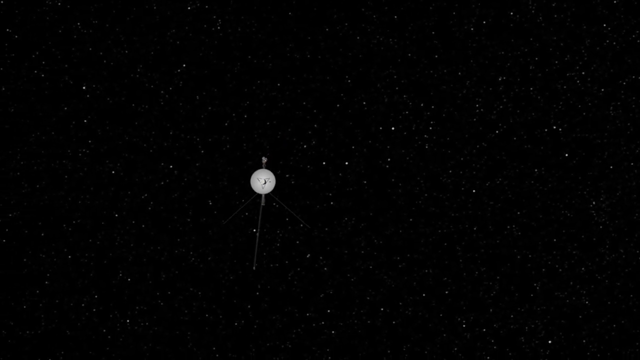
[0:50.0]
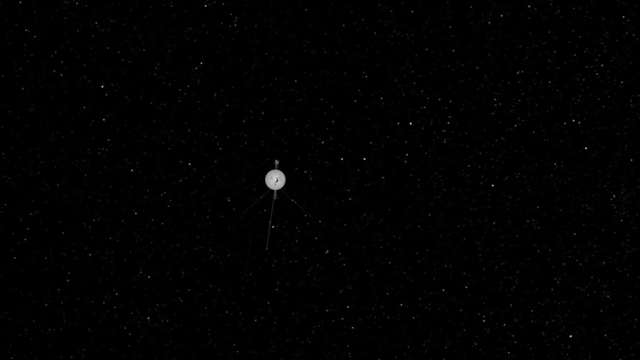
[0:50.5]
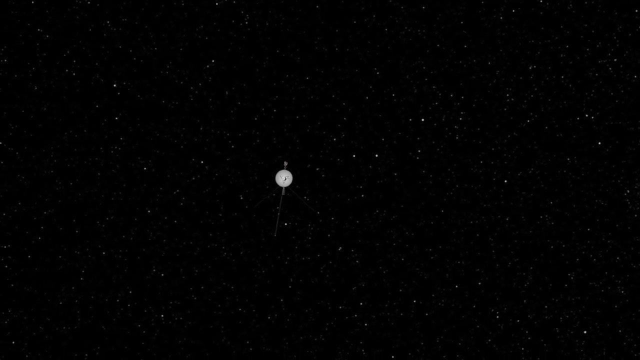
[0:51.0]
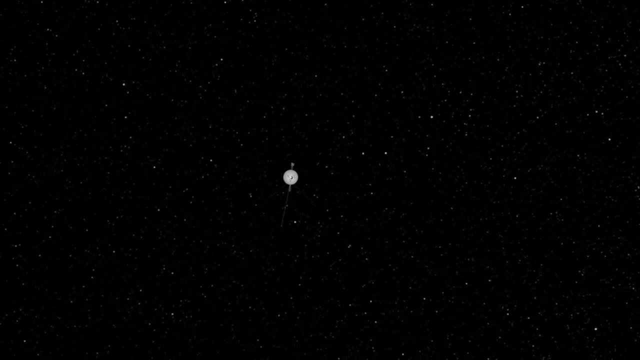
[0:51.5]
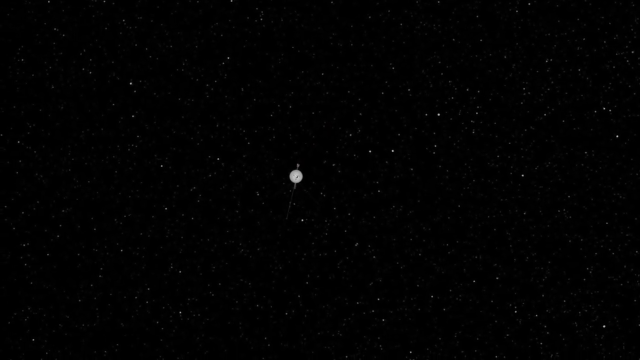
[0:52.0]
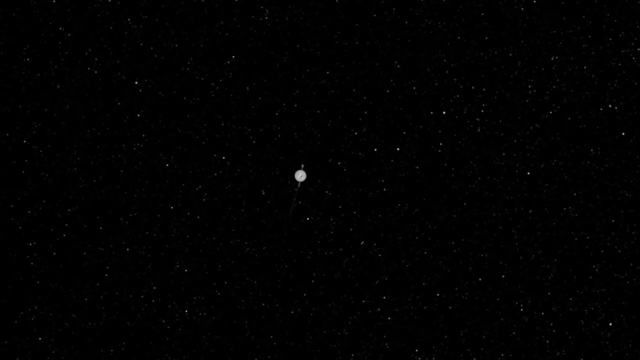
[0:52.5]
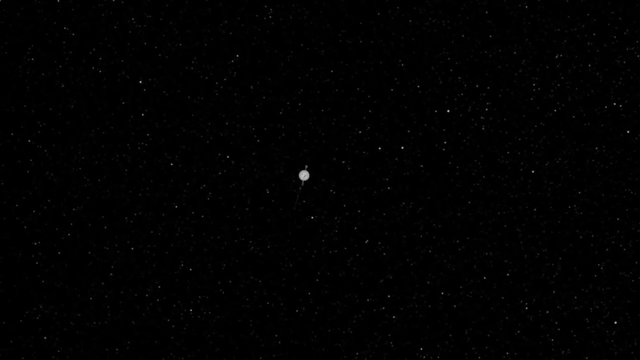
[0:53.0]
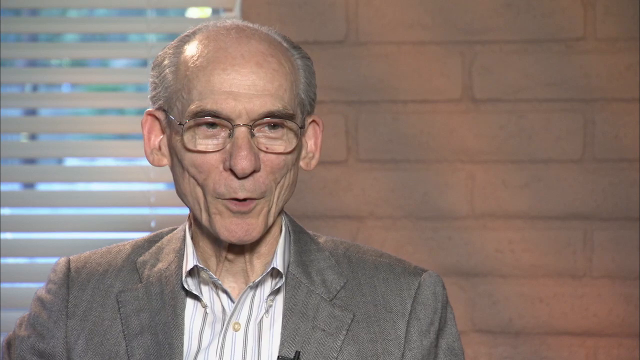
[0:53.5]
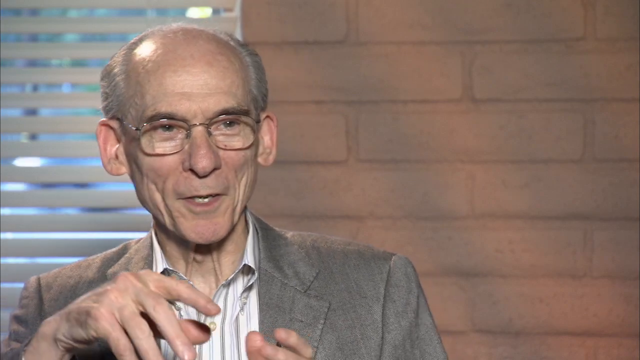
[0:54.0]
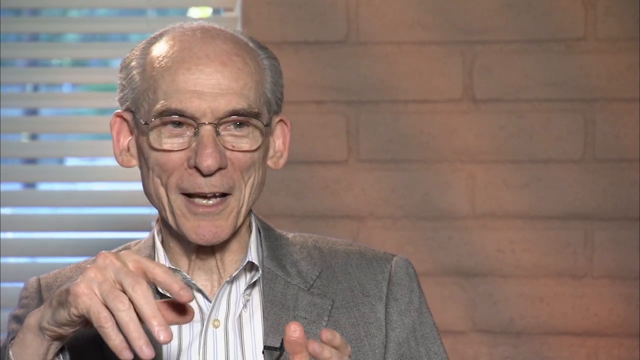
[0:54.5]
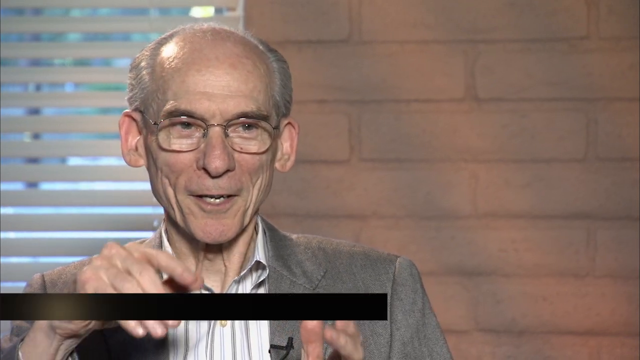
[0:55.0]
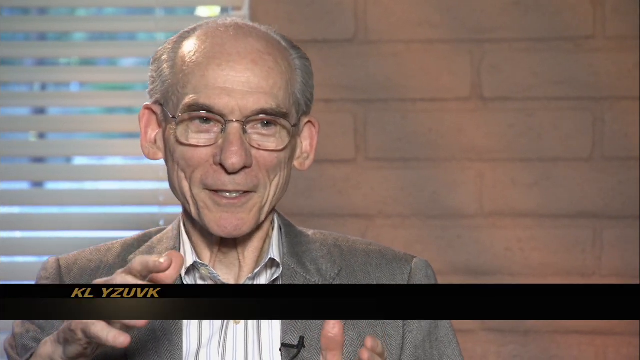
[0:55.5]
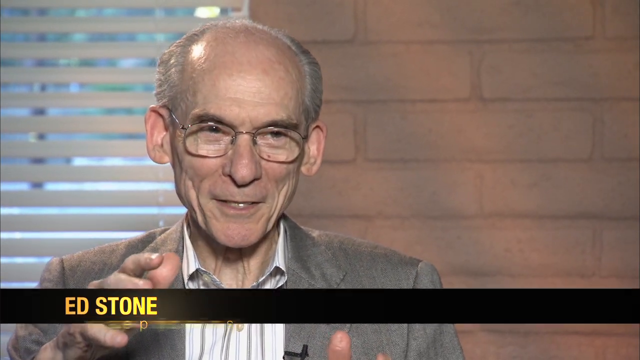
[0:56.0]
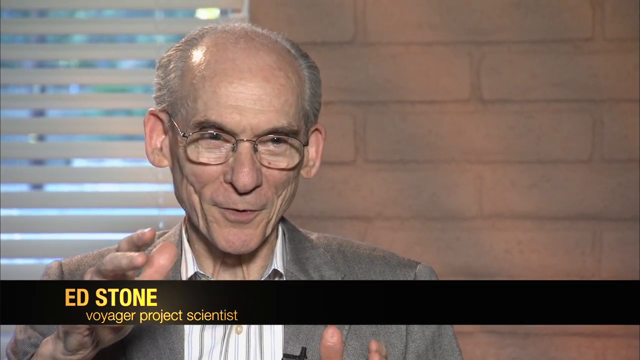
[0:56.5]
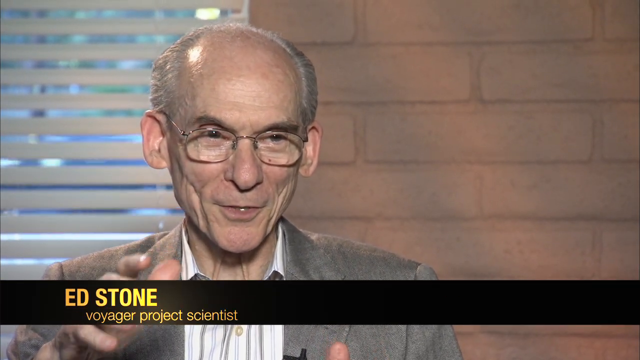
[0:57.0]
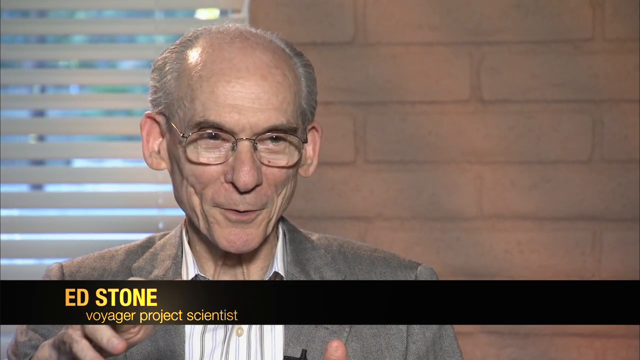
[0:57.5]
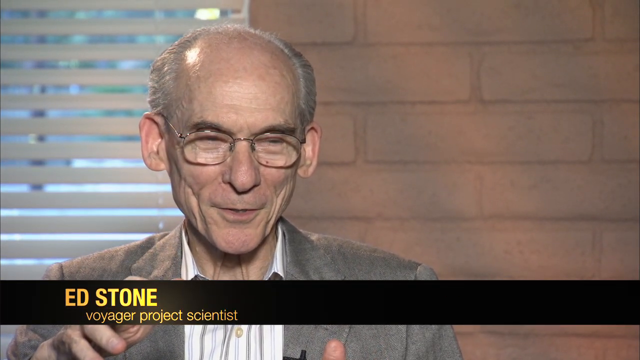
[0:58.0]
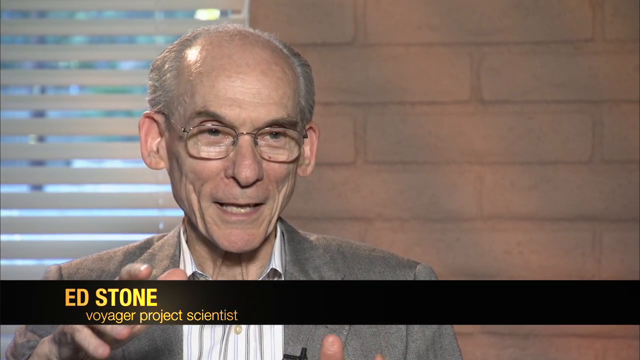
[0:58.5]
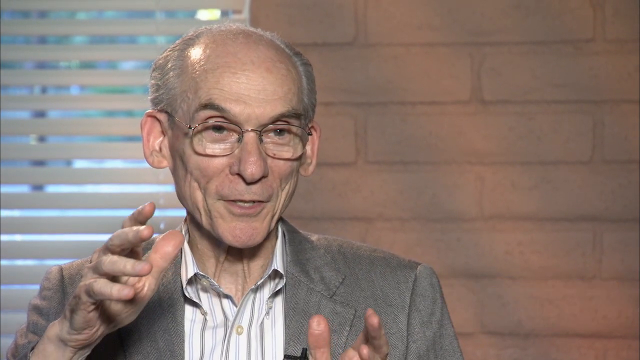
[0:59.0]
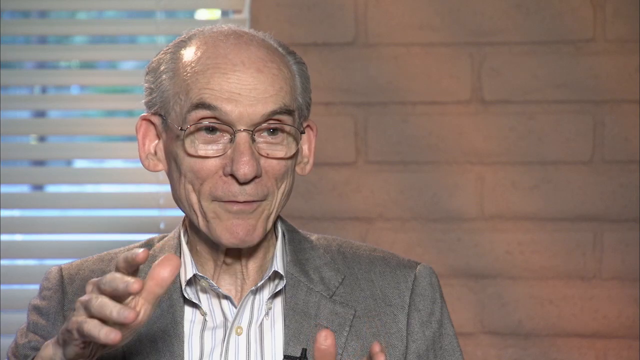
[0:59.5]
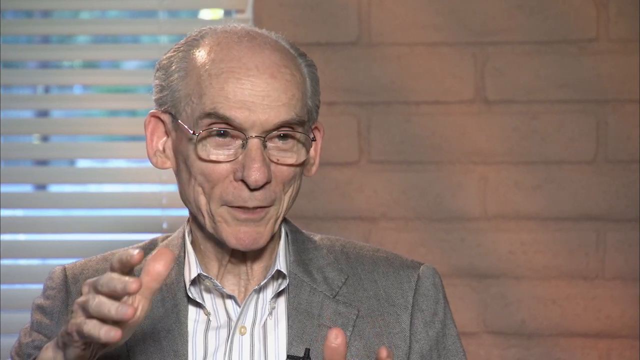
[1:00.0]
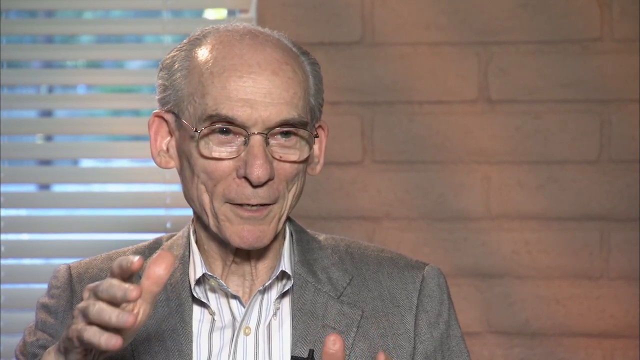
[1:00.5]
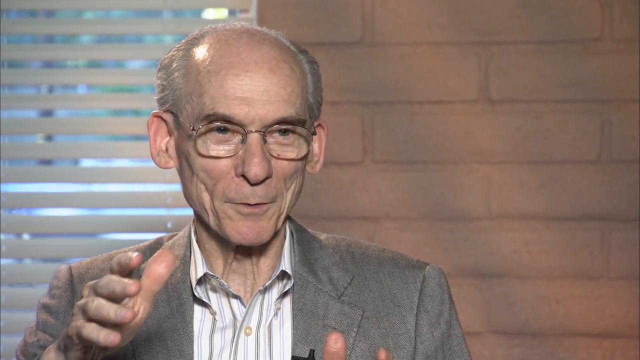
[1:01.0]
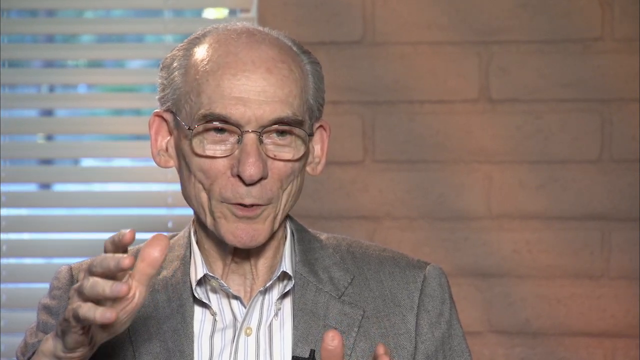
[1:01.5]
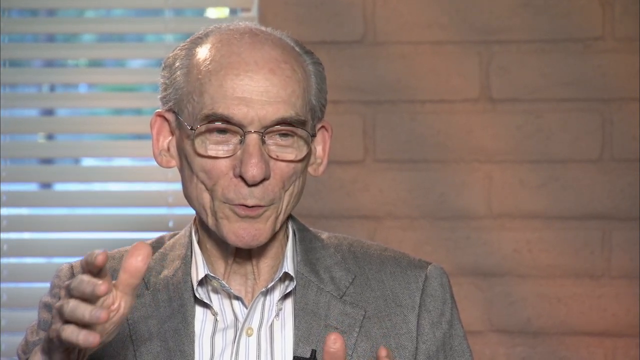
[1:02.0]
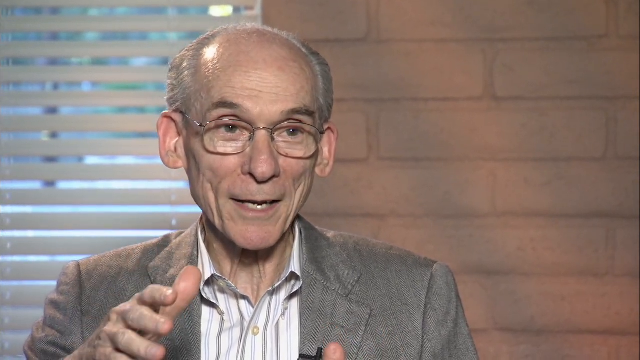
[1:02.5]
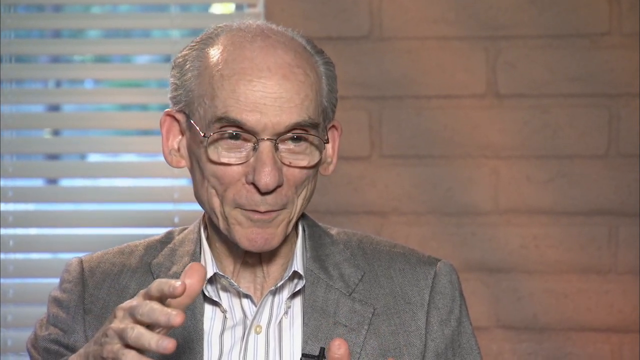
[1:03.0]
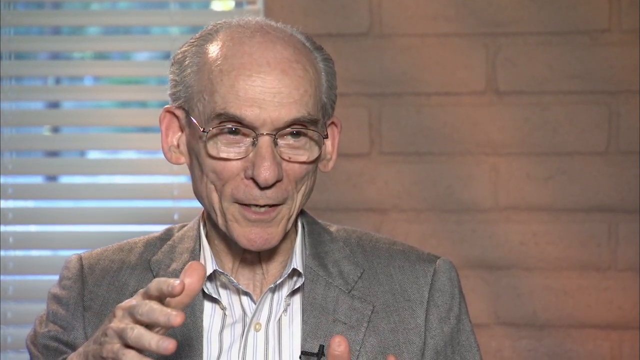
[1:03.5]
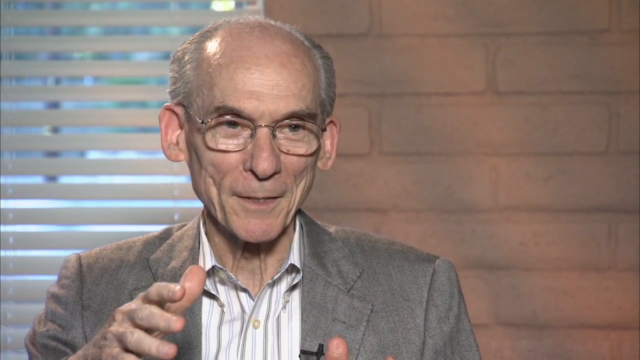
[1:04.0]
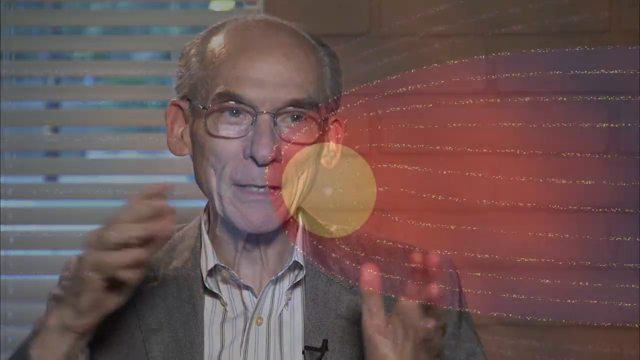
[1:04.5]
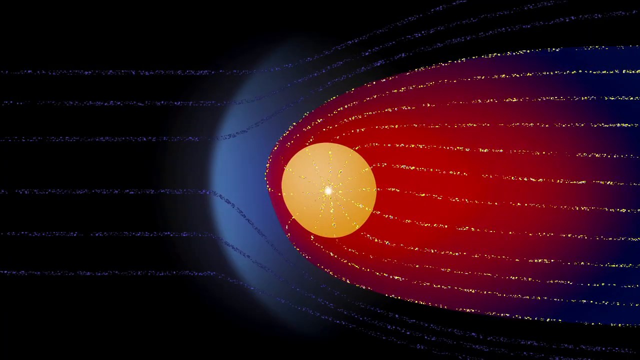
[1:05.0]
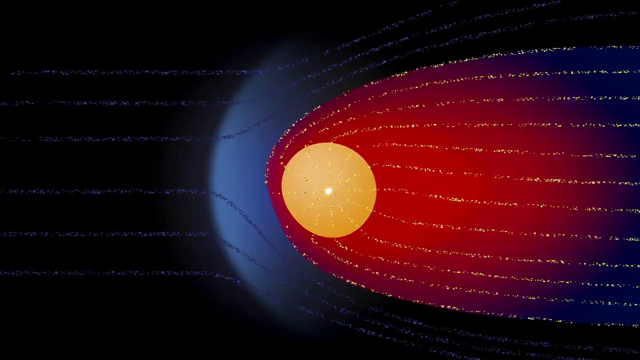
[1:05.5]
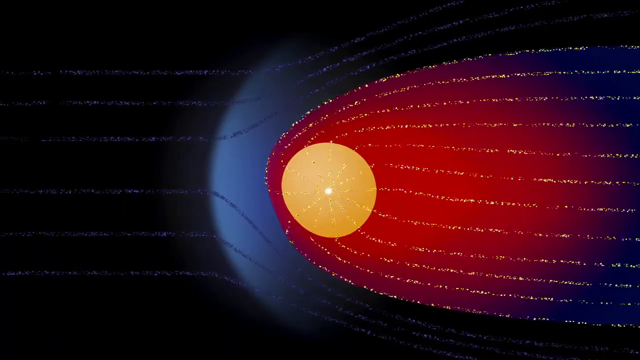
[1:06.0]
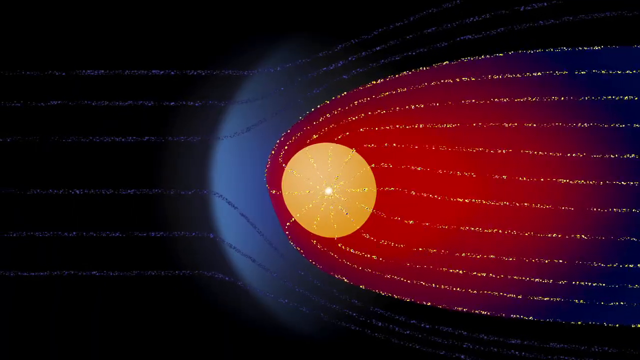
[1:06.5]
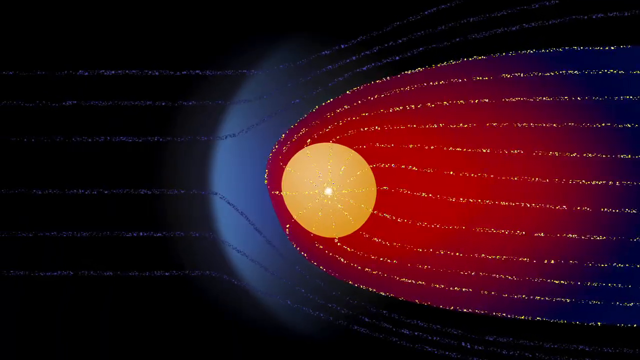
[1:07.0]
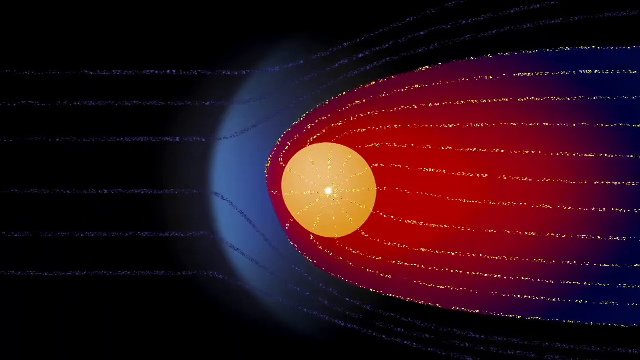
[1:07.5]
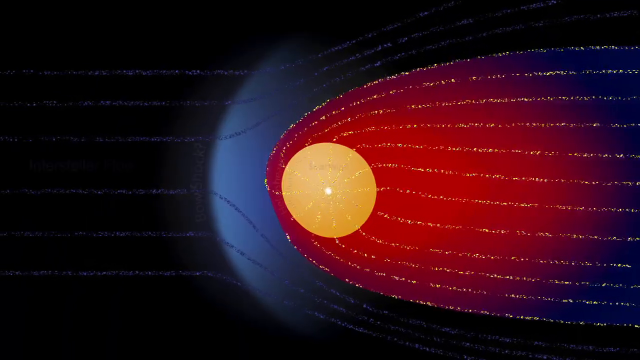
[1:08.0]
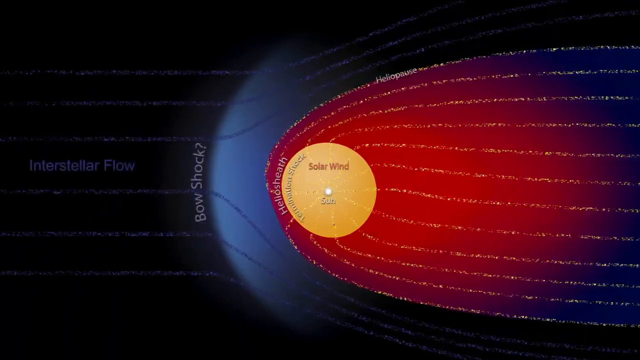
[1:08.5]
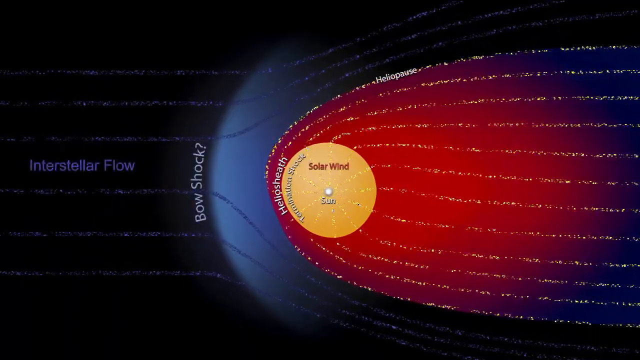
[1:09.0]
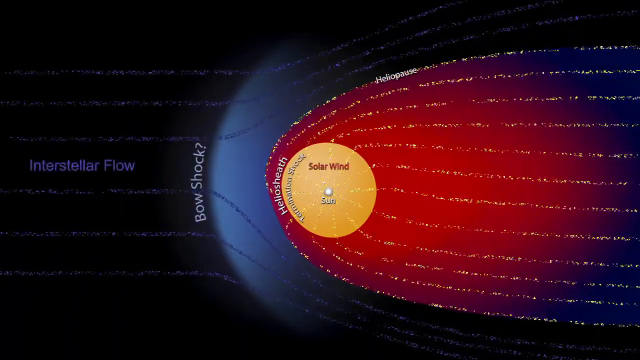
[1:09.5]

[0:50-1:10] A 3D model of Voyager is shown, followed by an older man with light pale skin talking. His name is shown as "Ed Stone", and the text says he is a "Voyager project scientist"; the name chyron is black and gold. A visual labeled "interstellar flow" shows what looks like a star or some sort of planet or moon flowing through space, with lines indicating its forward movement and trajectory. The man seems to be sitting in front of a window with white lines, with cars driving past in the background. A light brown brick wall, perhaps with a slightly reddish tint, is behind him.